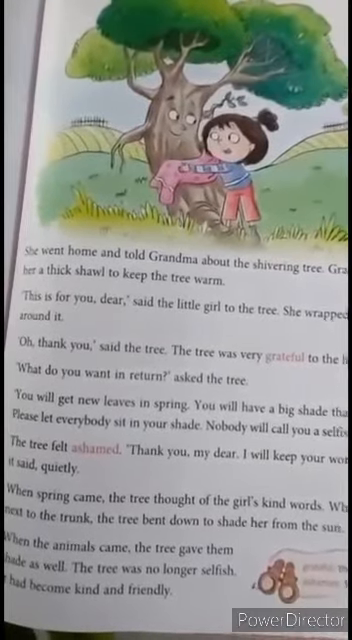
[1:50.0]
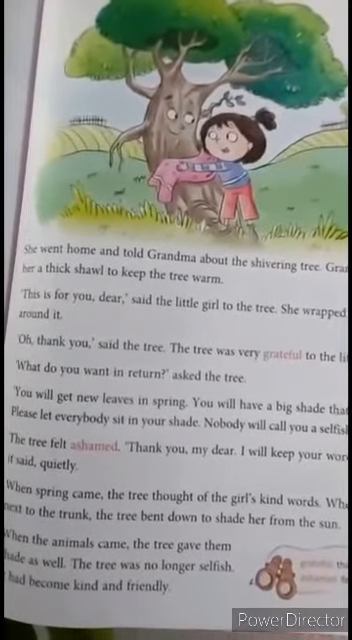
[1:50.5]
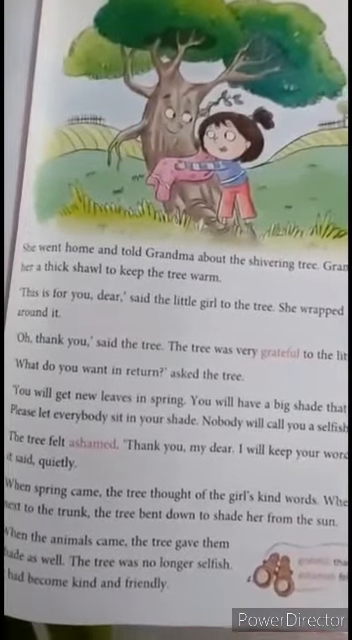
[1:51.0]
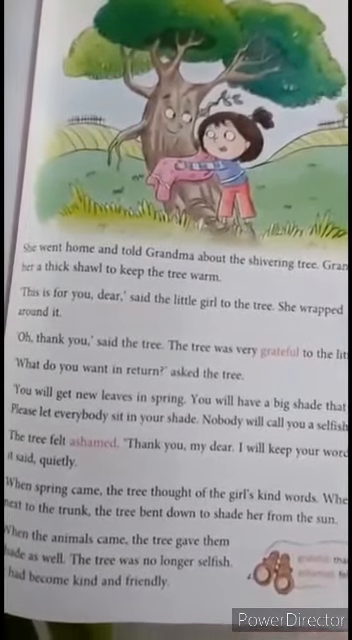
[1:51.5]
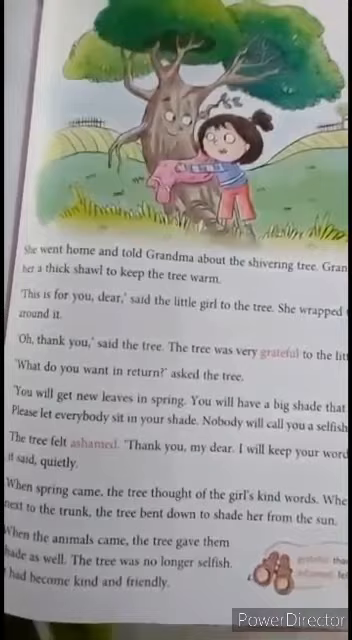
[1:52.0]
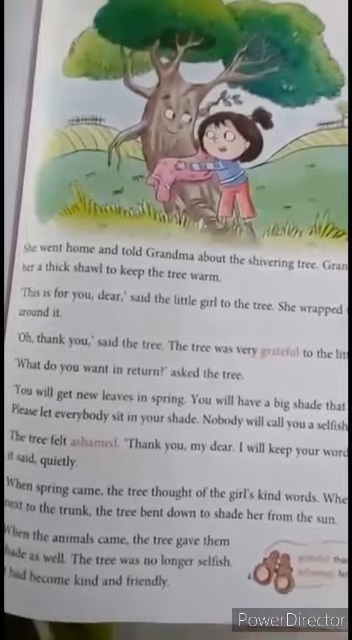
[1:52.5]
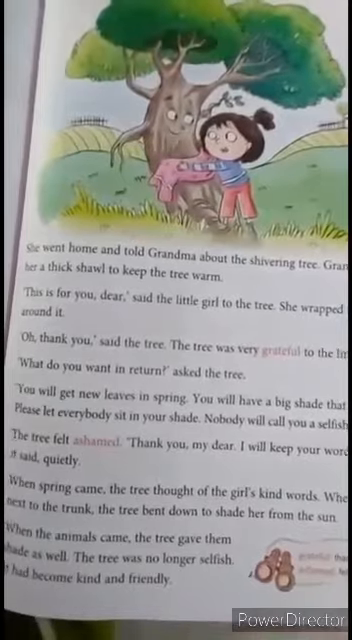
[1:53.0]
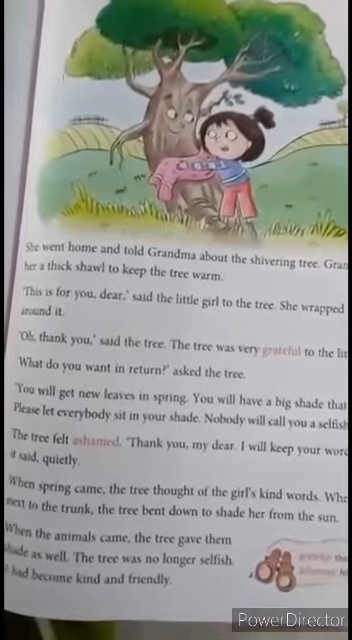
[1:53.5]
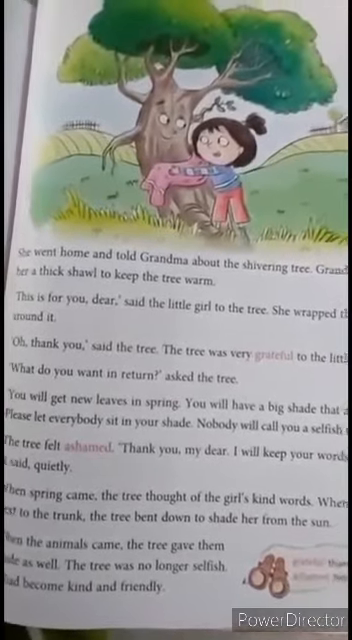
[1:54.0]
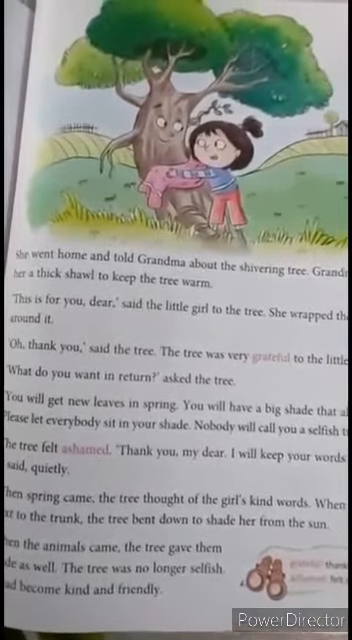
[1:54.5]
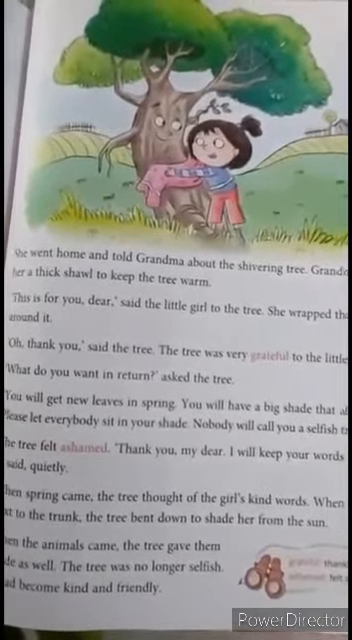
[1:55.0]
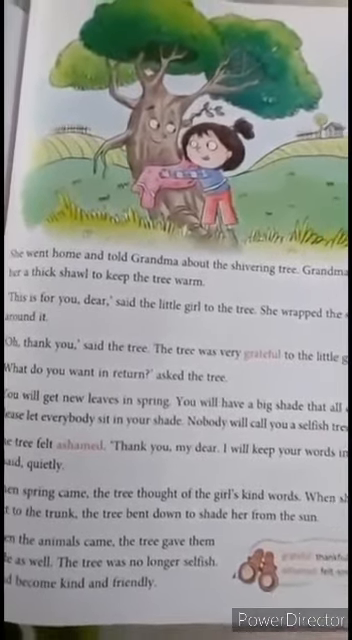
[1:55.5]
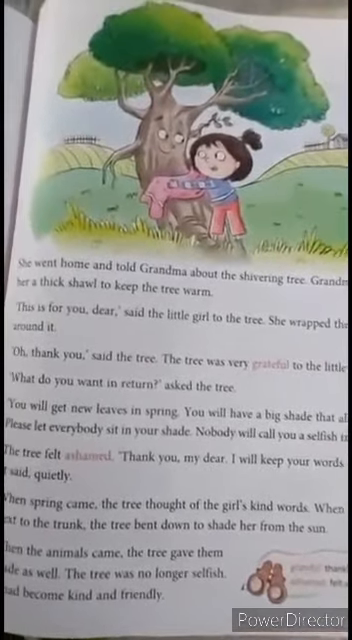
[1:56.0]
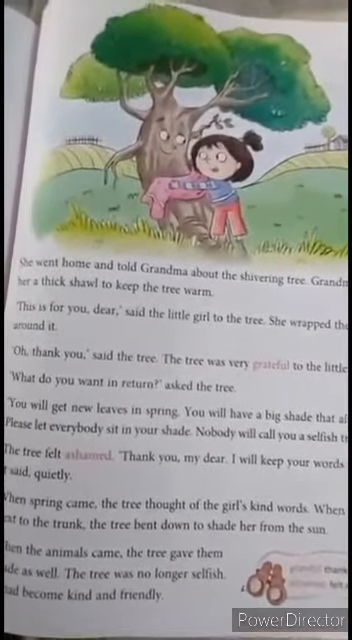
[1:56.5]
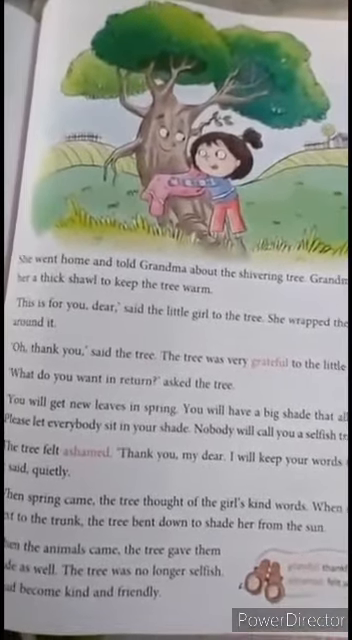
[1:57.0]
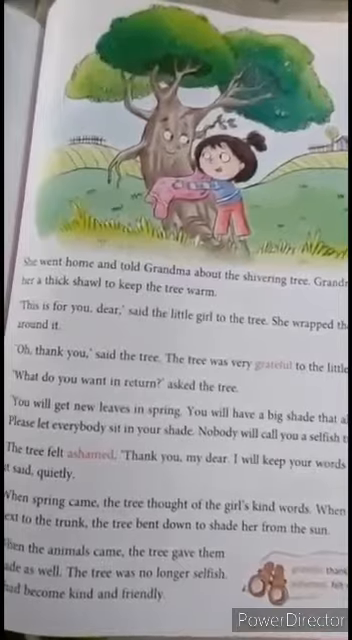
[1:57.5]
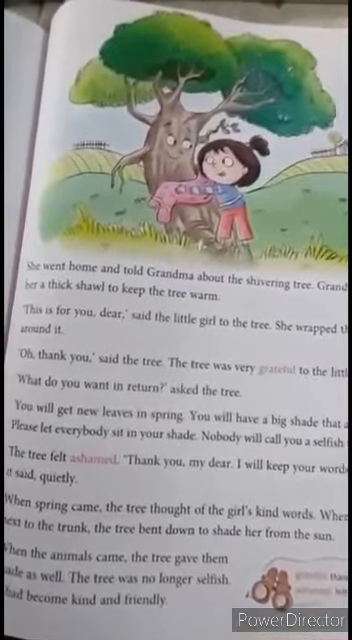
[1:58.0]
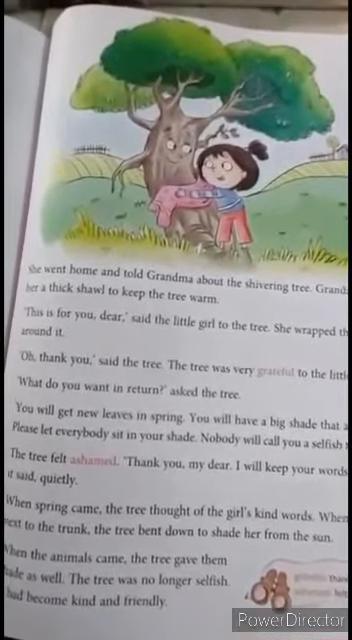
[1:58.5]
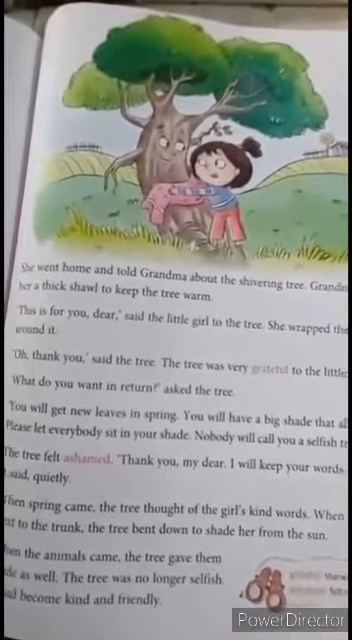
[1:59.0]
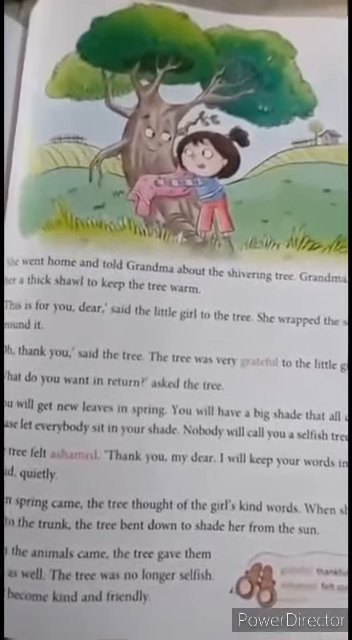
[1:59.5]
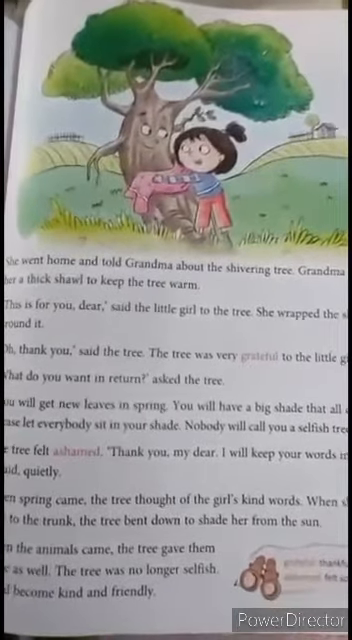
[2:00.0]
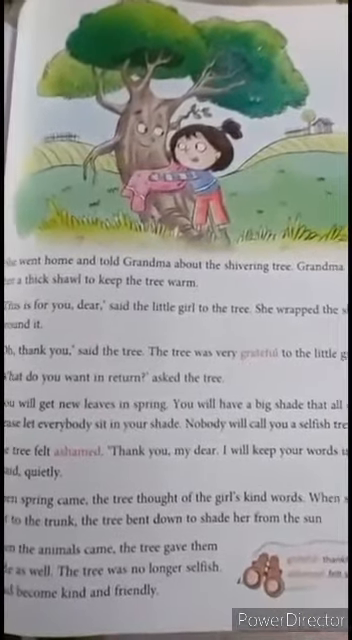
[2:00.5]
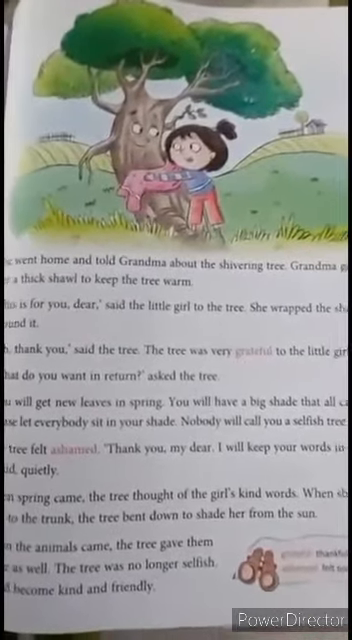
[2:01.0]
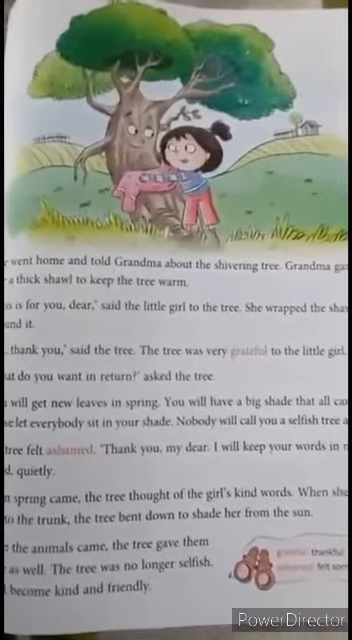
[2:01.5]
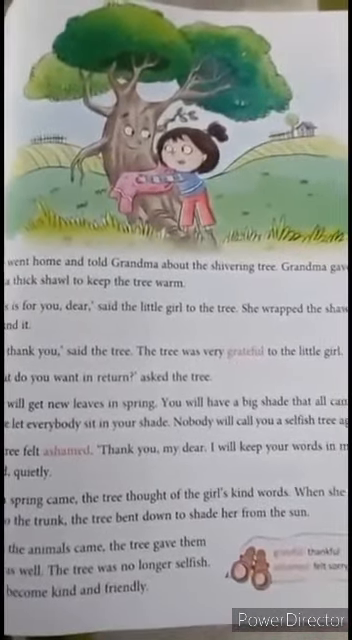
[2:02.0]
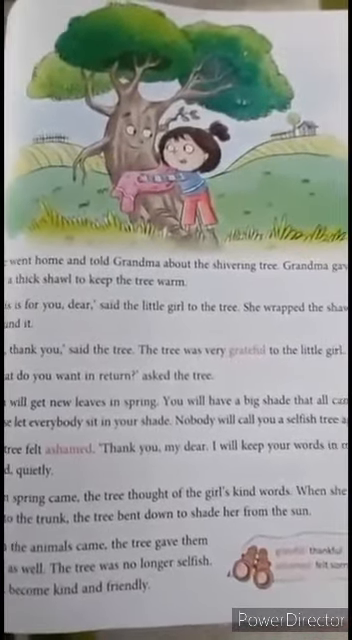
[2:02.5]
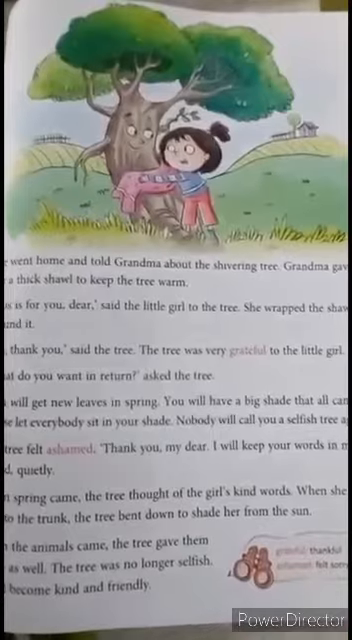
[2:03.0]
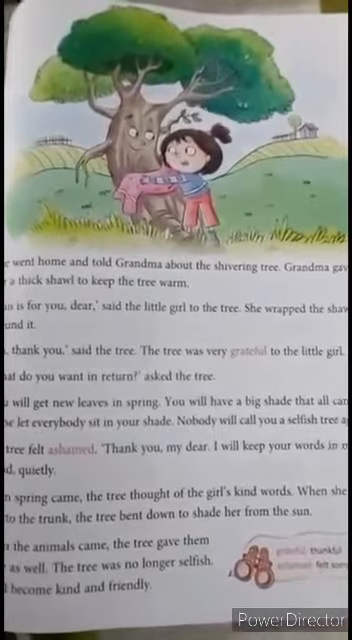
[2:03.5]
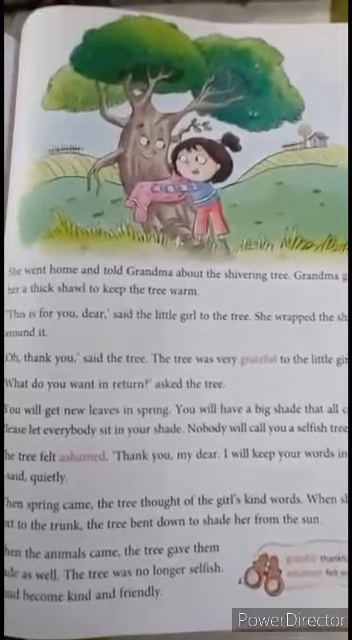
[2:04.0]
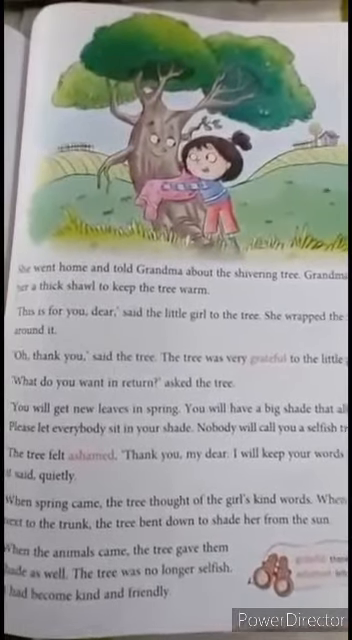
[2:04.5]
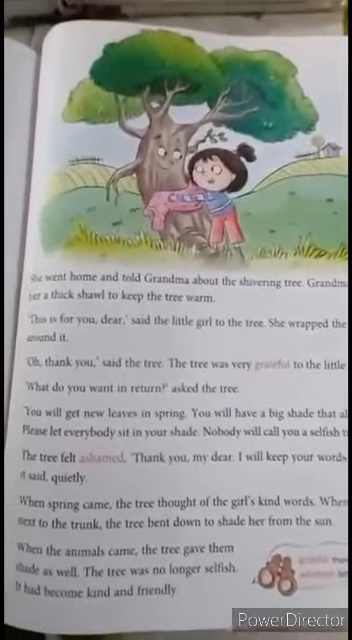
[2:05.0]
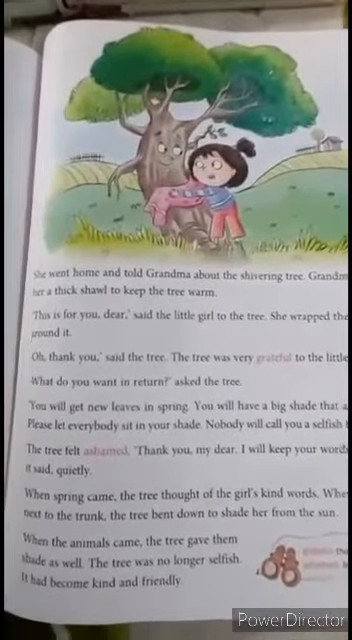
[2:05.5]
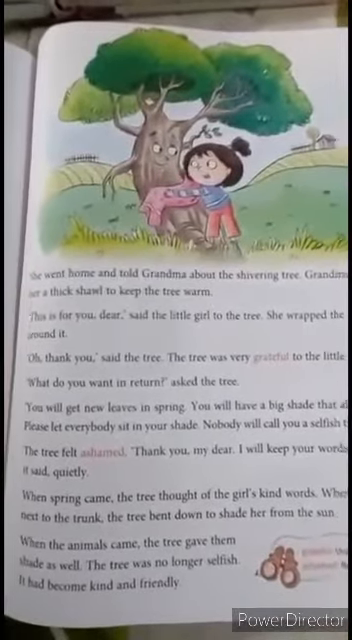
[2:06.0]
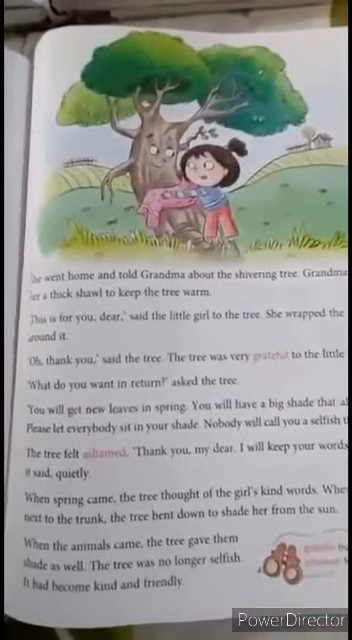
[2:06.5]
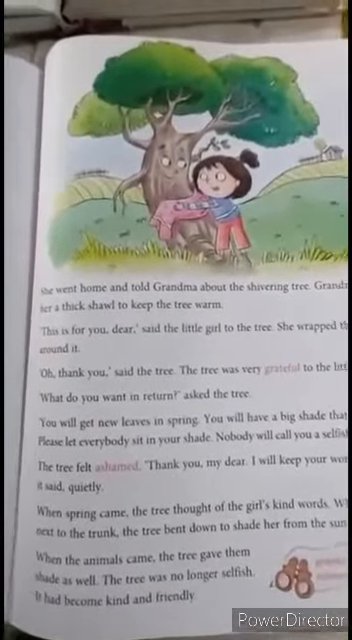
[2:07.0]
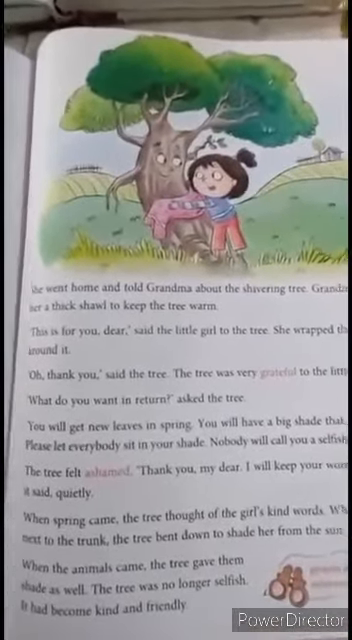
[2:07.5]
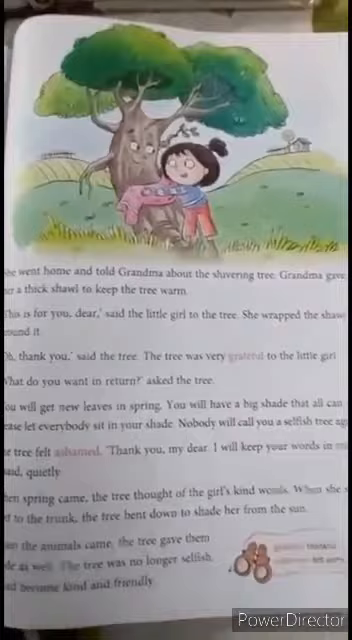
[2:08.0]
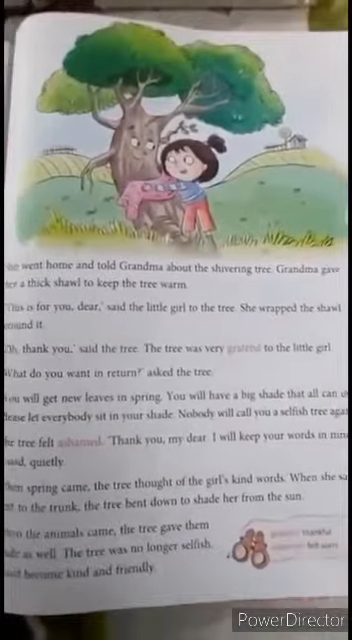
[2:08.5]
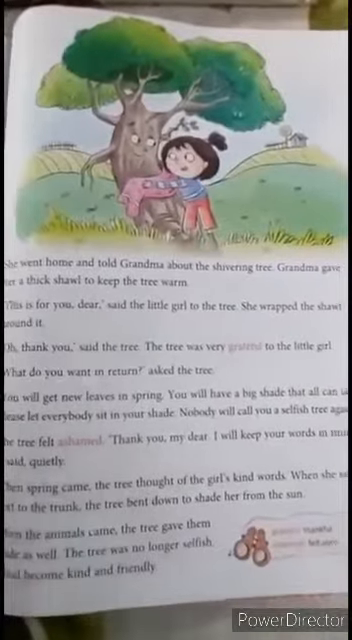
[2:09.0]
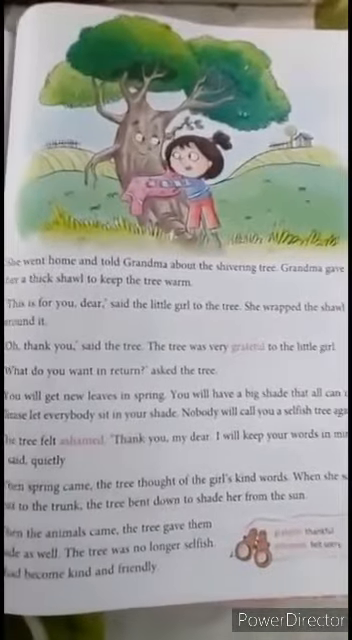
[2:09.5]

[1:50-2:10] The opened children's book, an illustrated book, shows an illustration at the top of the page and the story's words at the bottom; the title has not been shown. The illustration has a tree with eyes, a nose and a mouth, a couple of its limbs serving as its hands, and green on its top part. The tree is smiling and looking at a little girl who is looking back at it. The girl is probably eight to nine years old, with brown hair pulled up at the top and brown eyes. She wears pink pants and a blue shirt, and it looks like she is taking off her sweater, or it is a pink towel or a sweater. The text at the bottom is blurry, but a few words can be read: "told grandma about the shivering tree. This is for you, dear, said the little girl to the tree." She is giving the tree a towel.